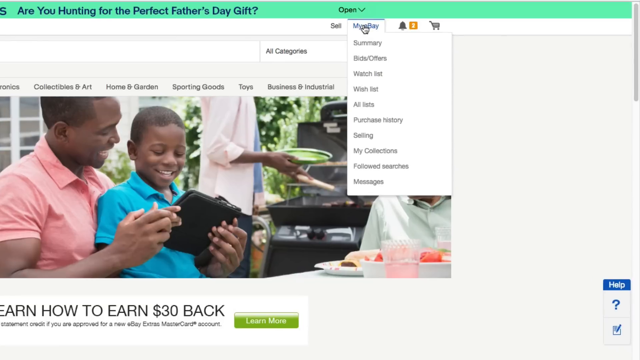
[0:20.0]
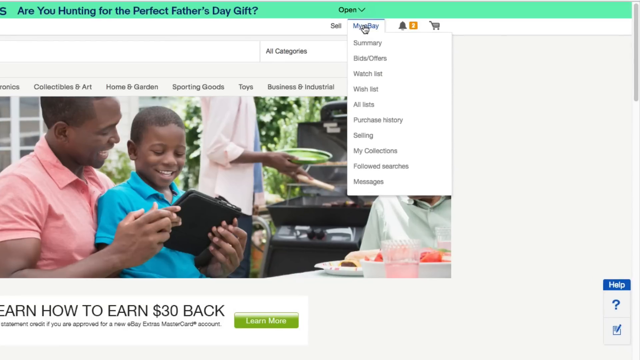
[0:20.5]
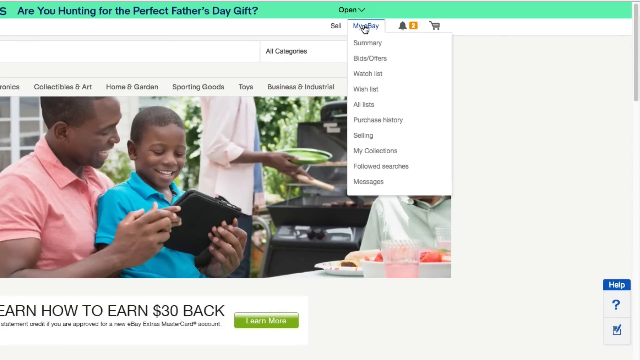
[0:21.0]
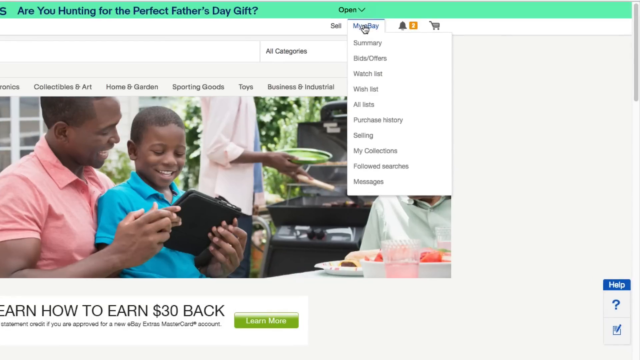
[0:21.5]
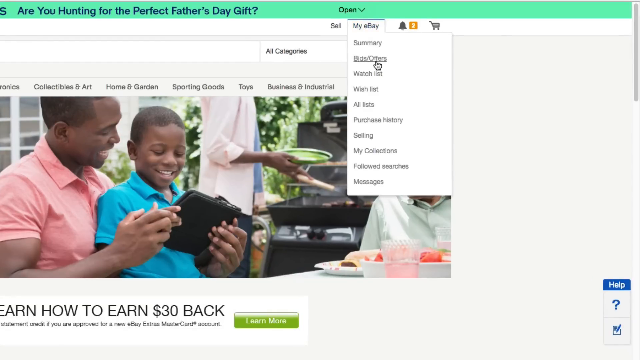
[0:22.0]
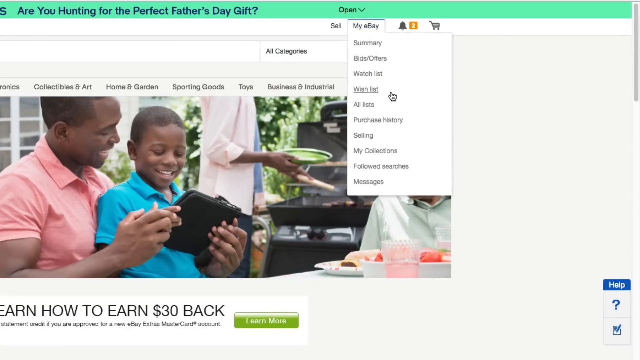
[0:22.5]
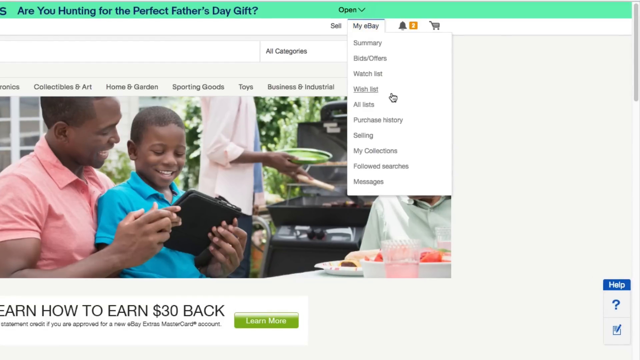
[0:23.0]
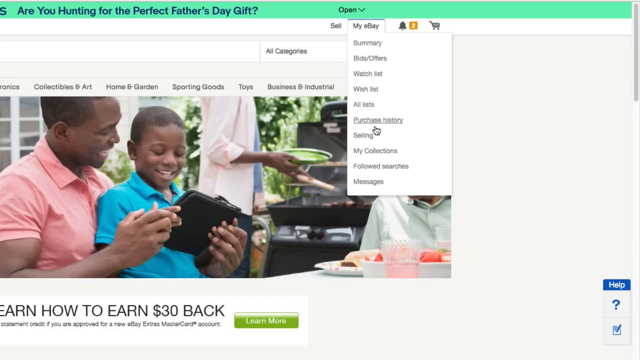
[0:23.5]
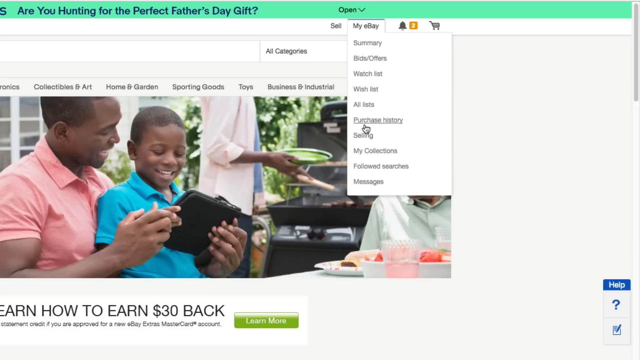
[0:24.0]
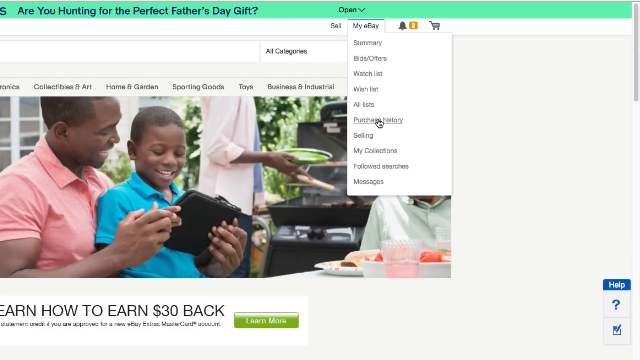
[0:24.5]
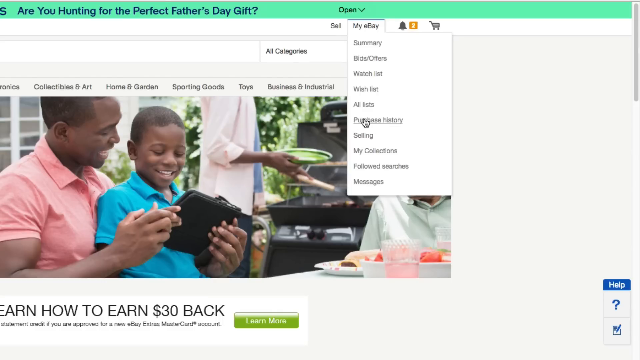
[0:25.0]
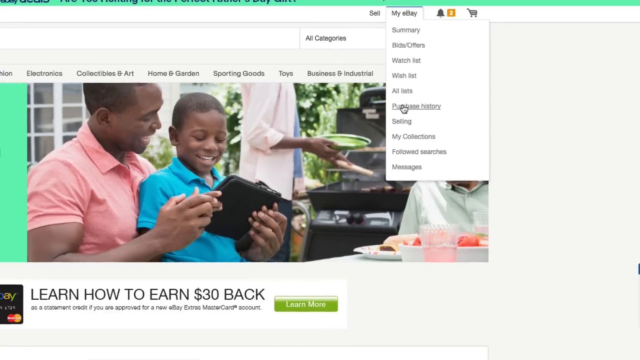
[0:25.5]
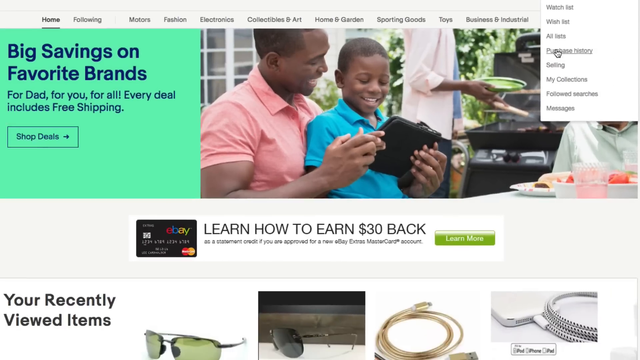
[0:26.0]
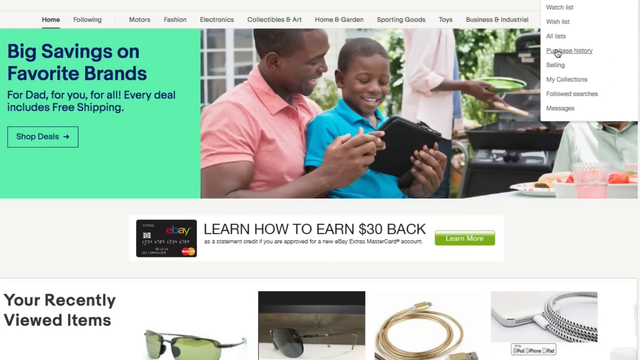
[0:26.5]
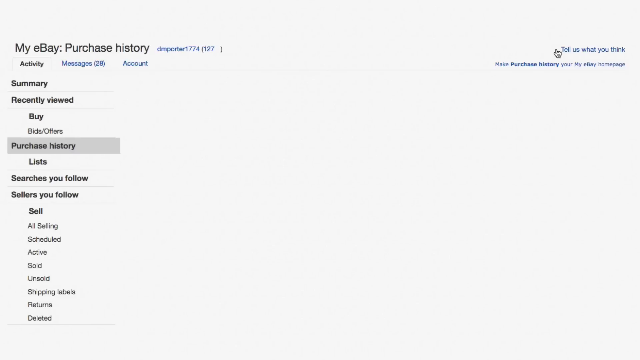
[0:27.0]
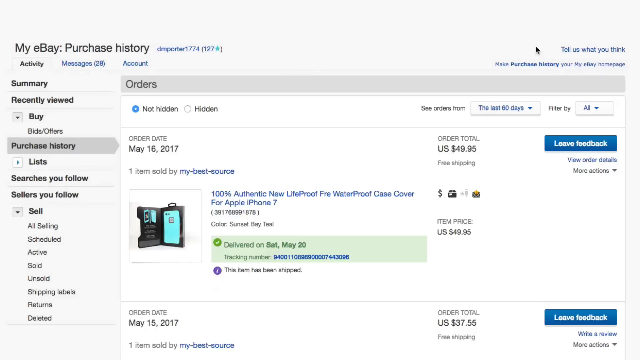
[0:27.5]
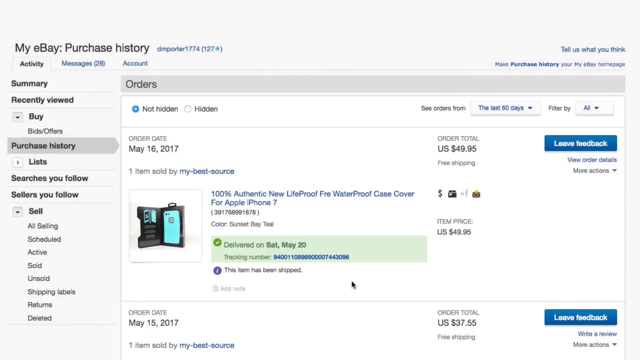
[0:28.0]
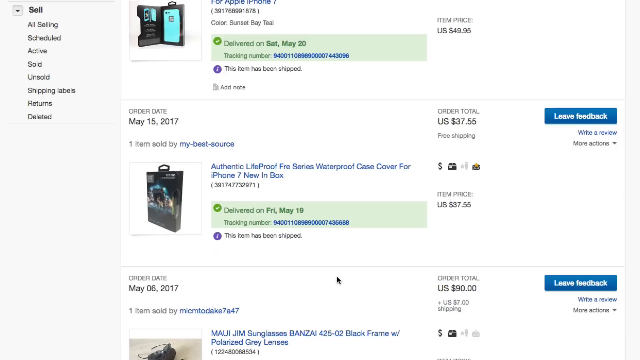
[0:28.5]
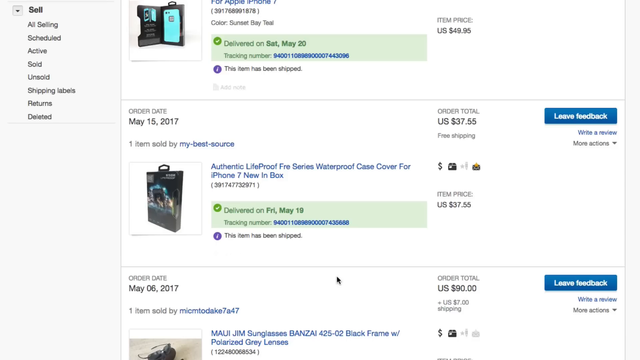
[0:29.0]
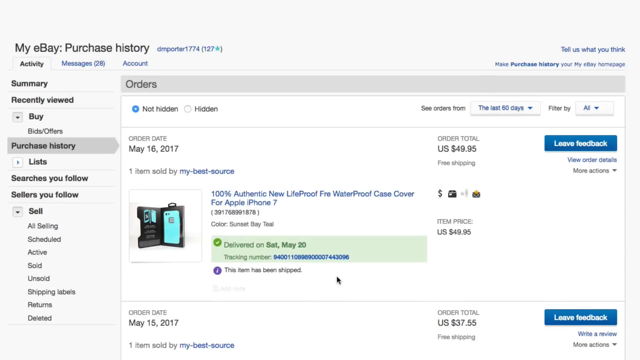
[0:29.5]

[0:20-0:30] The user clicks on My eBay and moves the mouse pointer to what looks like the payment history button, highlighting it and hovering over it. The video zooms back out to the home page in a bigger screen while the person clicks purchase history. The purchase history page then pops up. The most recent order appears to be dated May 16, 2017, with an order total of $49.95 for a waterproof case for an iPhone 7. There also appears to be a second purchase dated May 15, which the user scrolls down to show: another case for the iPhone 7, priced at $37.55.